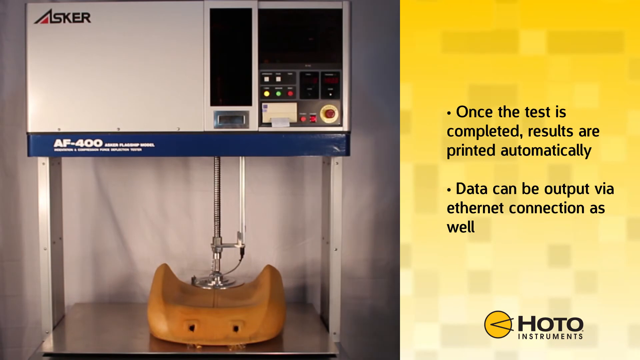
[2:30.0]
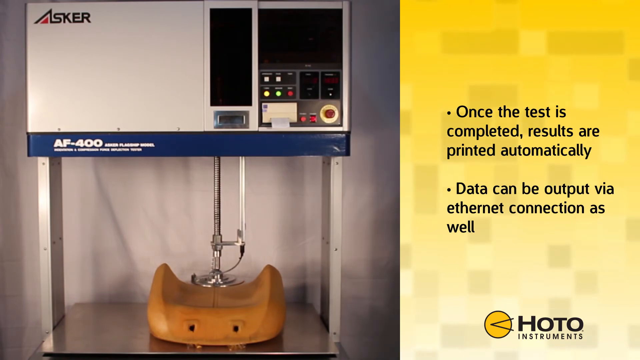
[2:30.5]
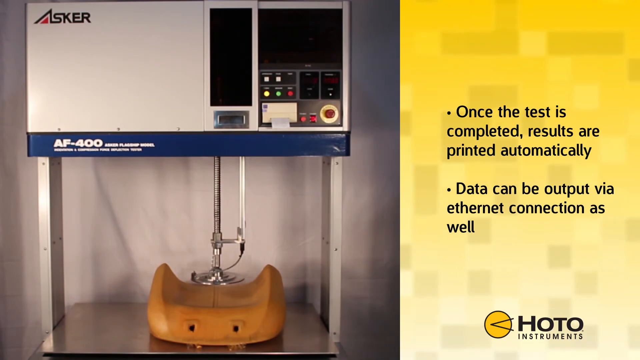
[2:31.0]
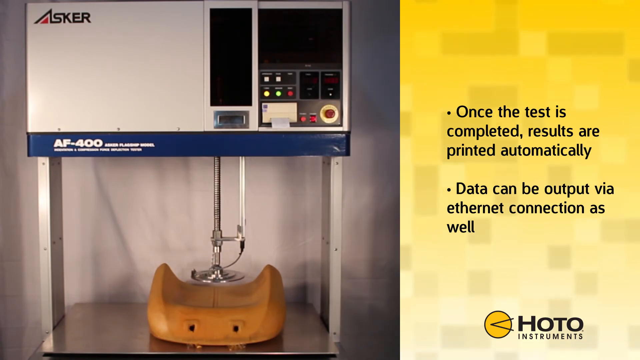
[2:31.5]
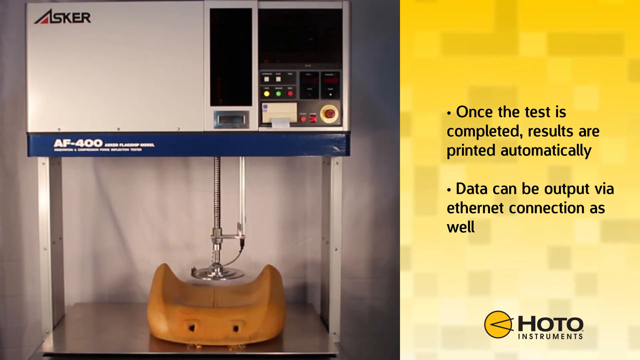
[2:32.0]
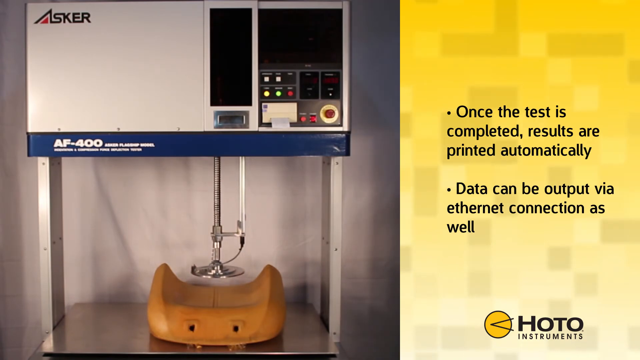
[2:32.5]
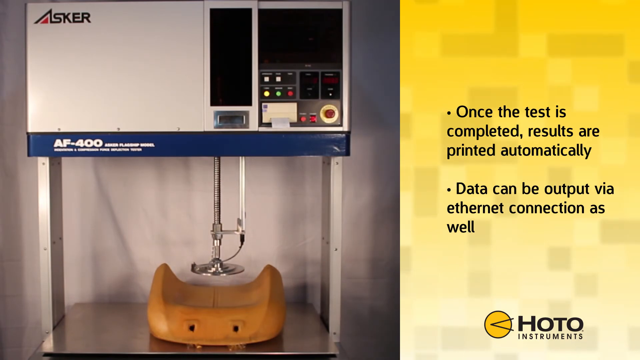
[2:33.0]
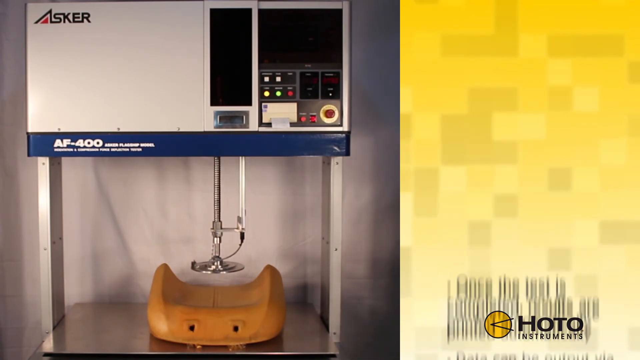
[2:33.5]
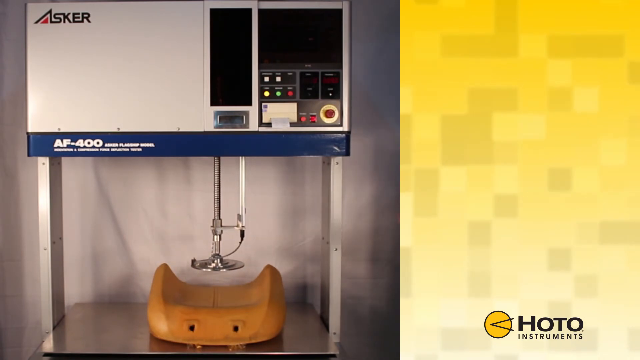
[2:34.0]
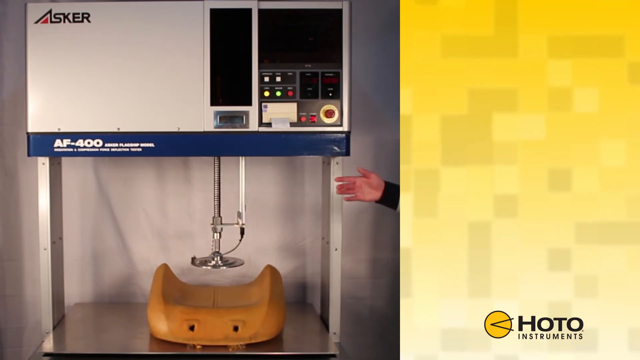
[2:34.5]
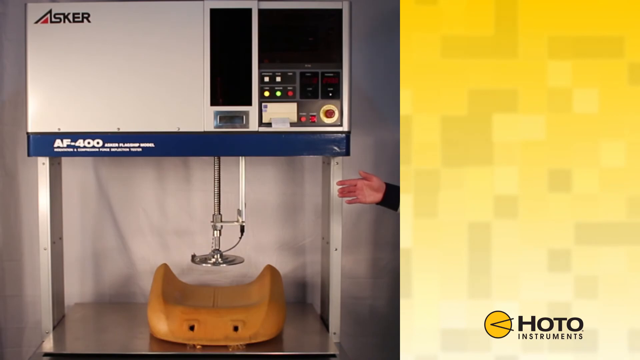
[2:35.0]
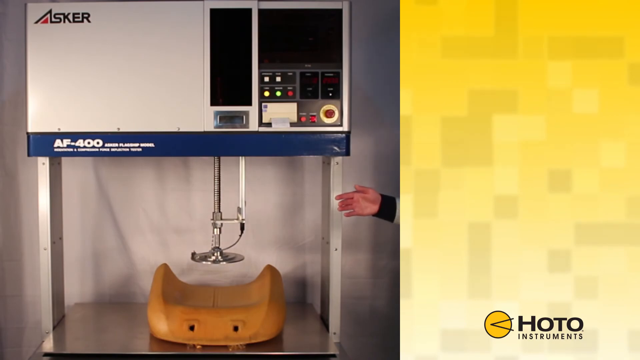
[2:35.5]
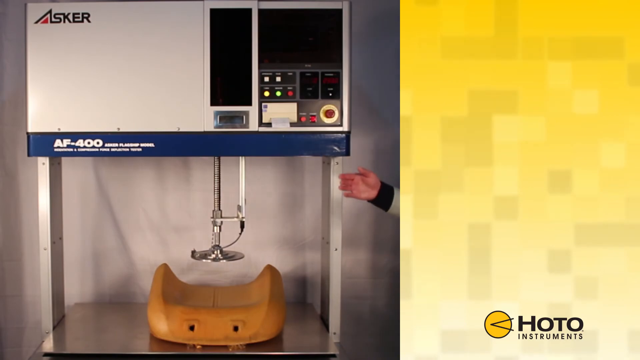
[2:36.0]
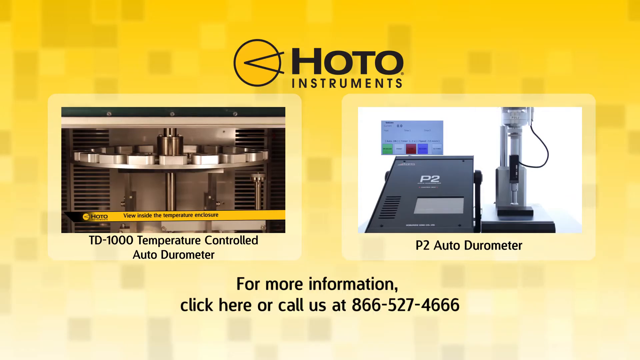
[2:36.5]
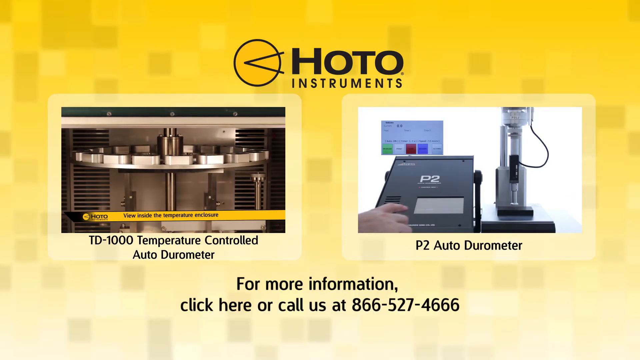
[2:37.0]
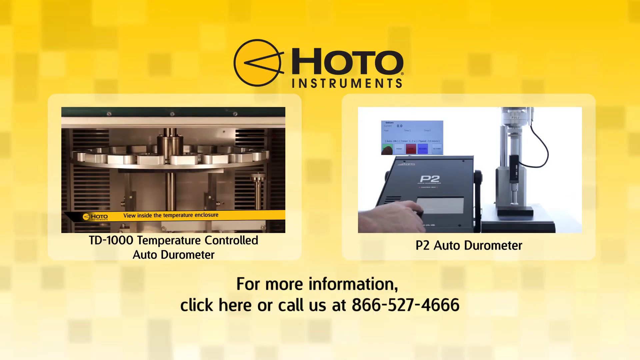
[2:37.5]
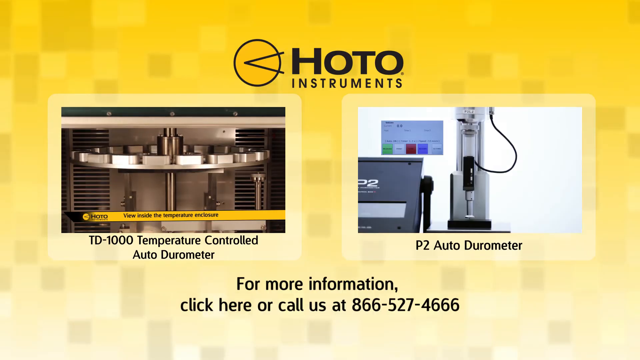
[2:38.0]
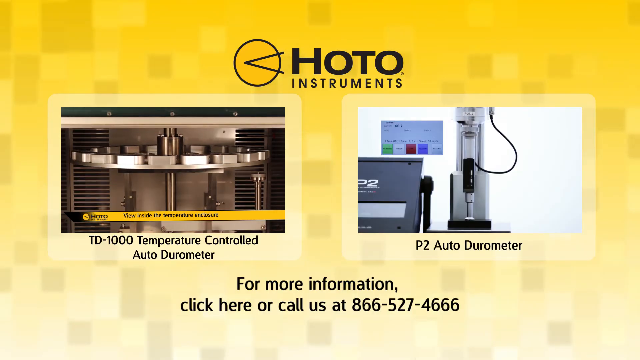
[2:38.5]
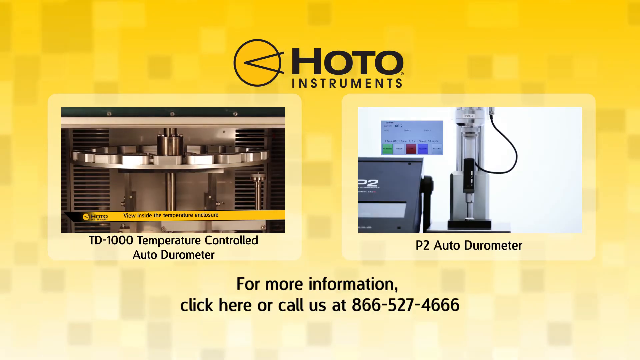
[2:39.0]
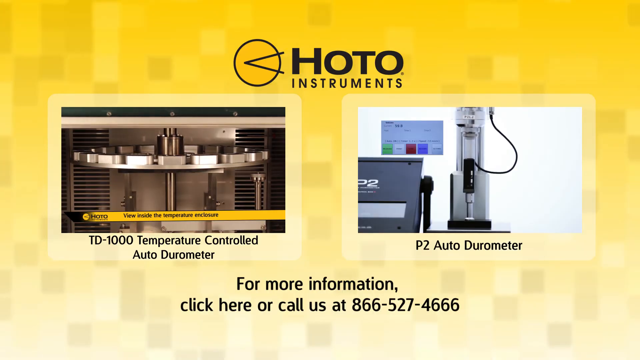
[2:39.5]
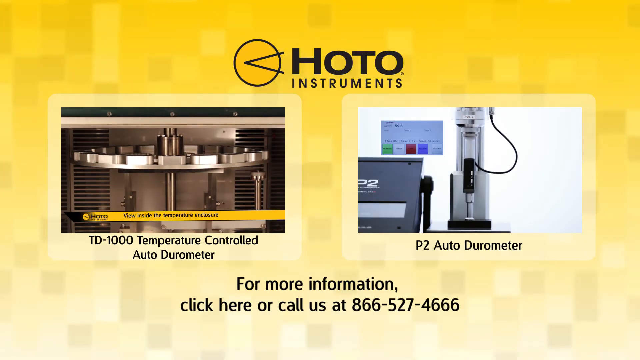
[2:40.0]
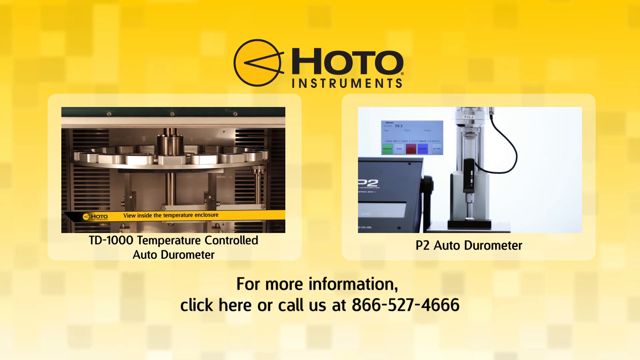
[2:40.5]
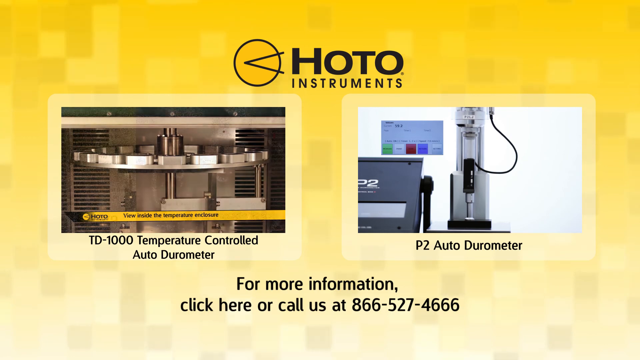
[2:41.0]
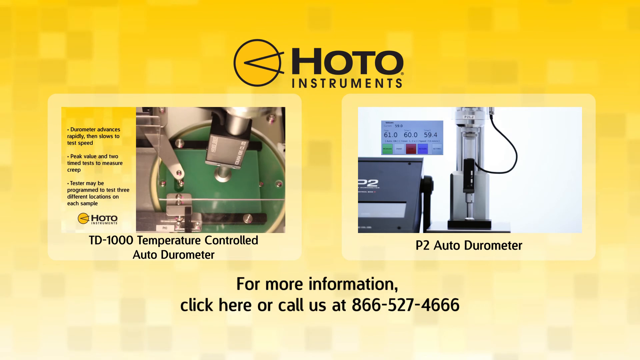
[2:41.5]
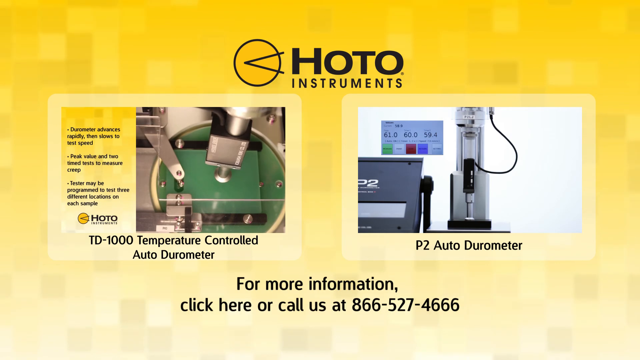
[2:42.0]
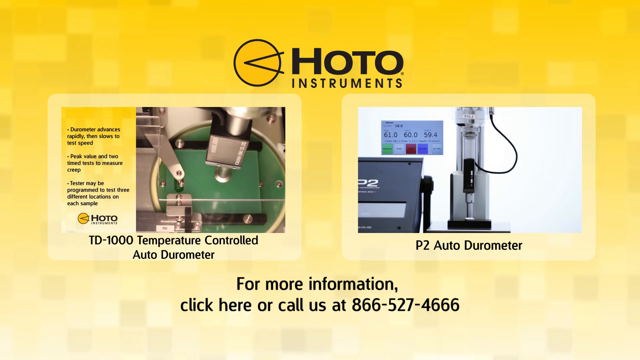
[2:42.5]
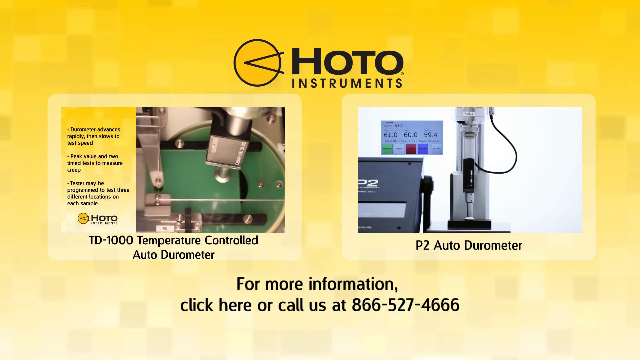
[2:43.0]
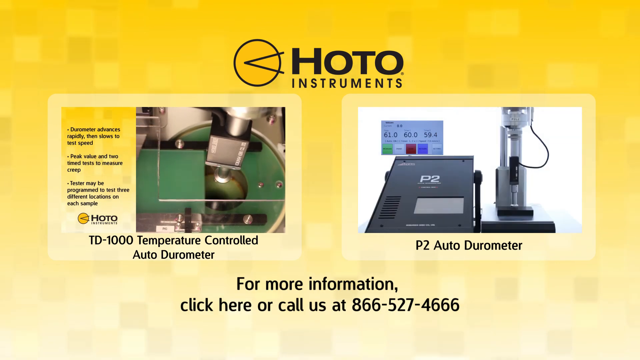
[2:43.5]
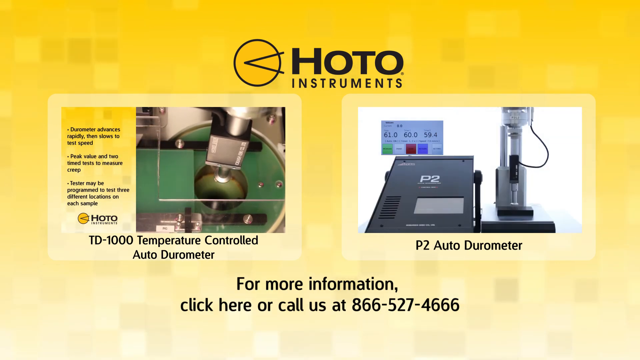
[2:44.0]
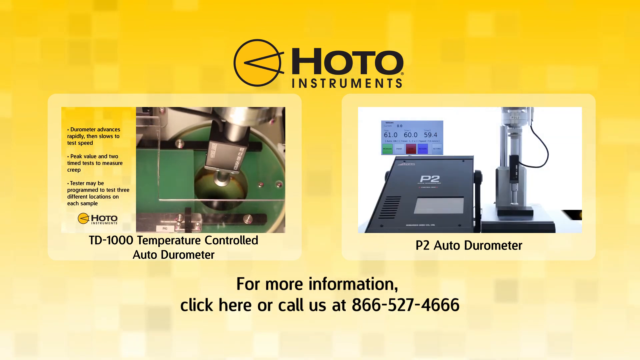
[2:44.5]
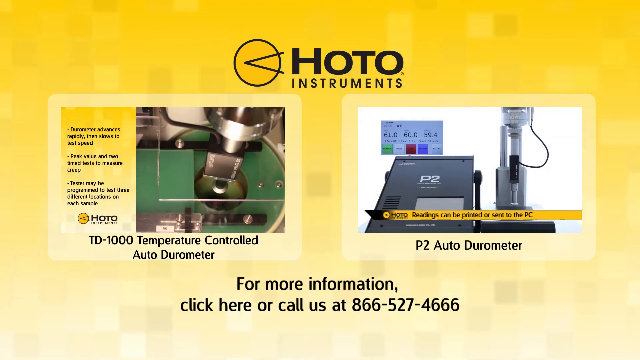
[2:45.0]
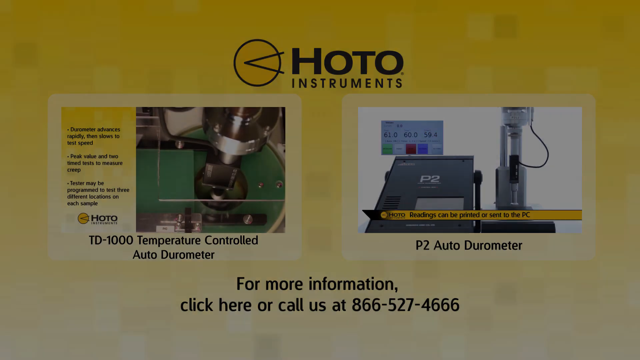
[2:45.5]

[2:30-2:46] The test finishes while the data points remain on the right. A hand comes in with a shadow, gesturing up and down. The next screen is for HOTO Instruments and advertises two other products: a picture of the "TD-1000 temperature controlled auto durometer", which looks like some metal with apparently something circular in it, and on the right the "P2 auto durometer", which looks completely different. At the bottom is the text "for more information, click here or call us at 1-866-527-4666". The black and gray band at the bottom leaves the phone number kind of grayed out. The pieces of equipment move, and the video ends on the two pieces of equipment.